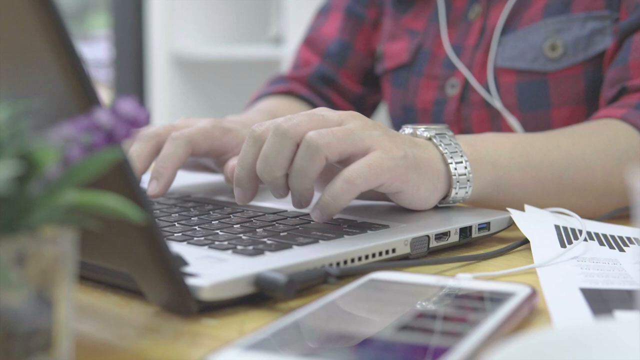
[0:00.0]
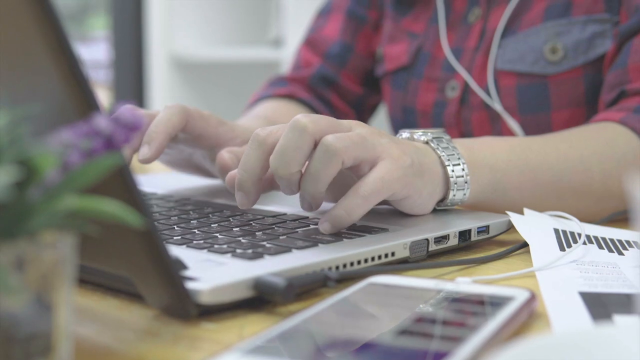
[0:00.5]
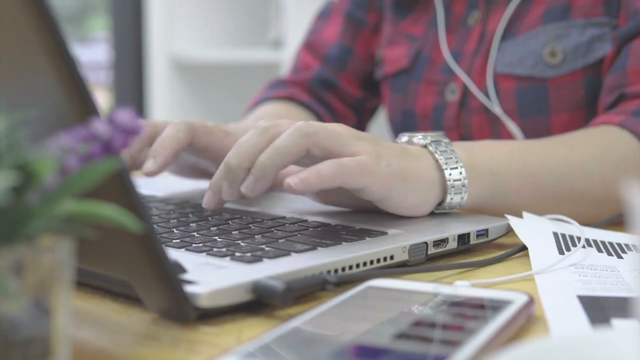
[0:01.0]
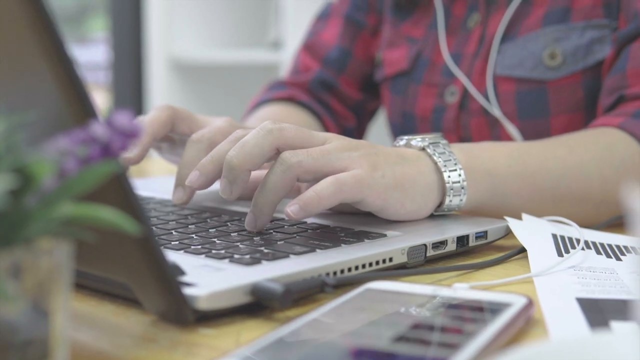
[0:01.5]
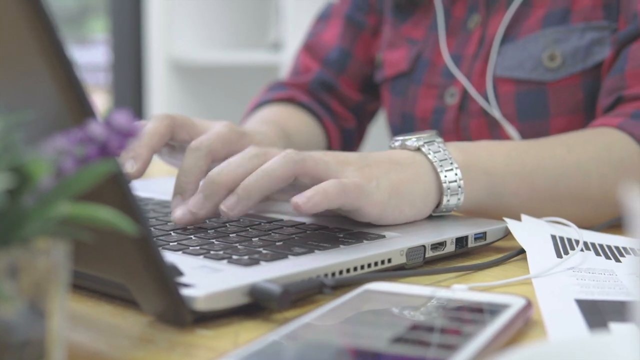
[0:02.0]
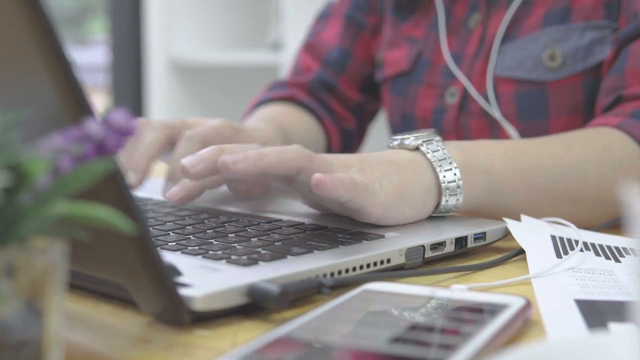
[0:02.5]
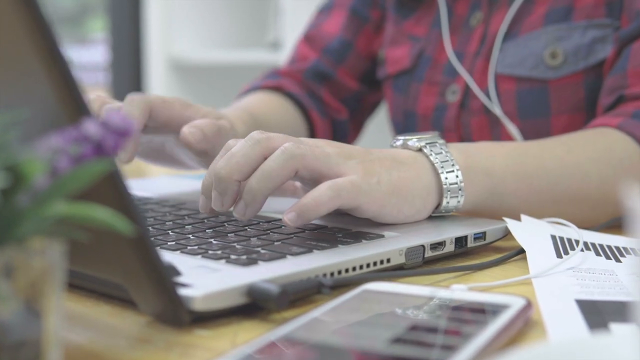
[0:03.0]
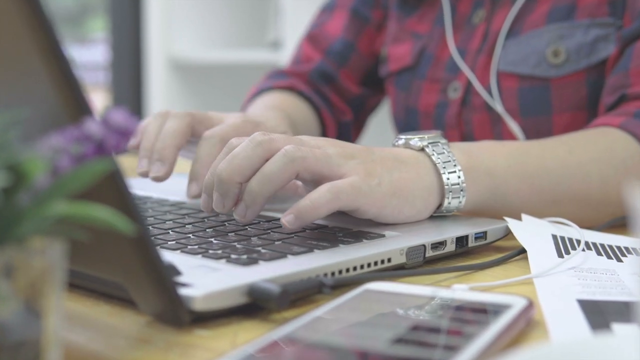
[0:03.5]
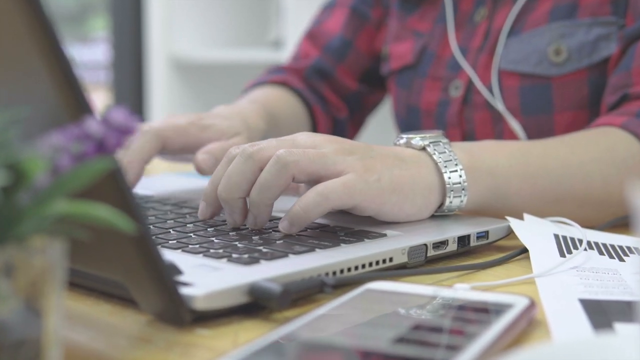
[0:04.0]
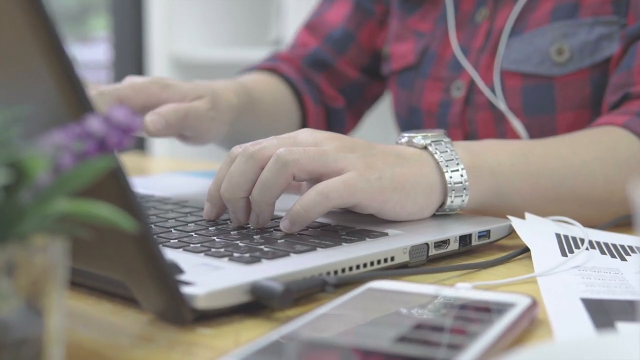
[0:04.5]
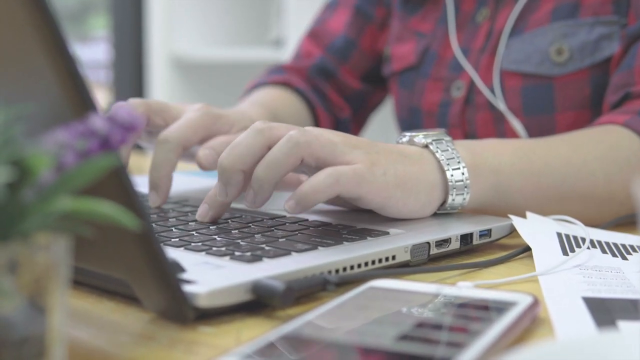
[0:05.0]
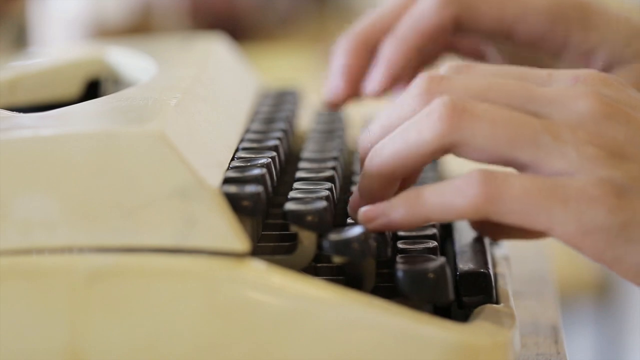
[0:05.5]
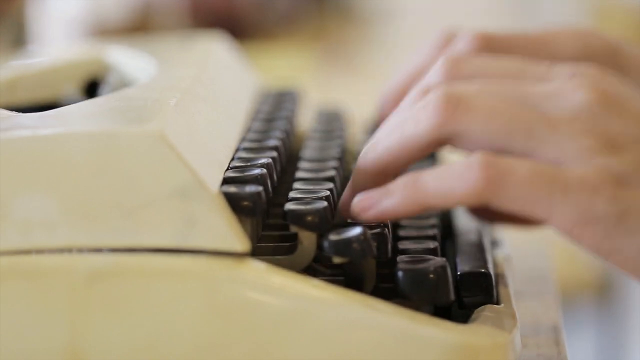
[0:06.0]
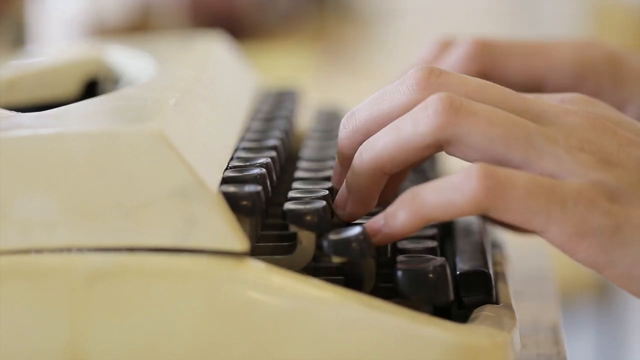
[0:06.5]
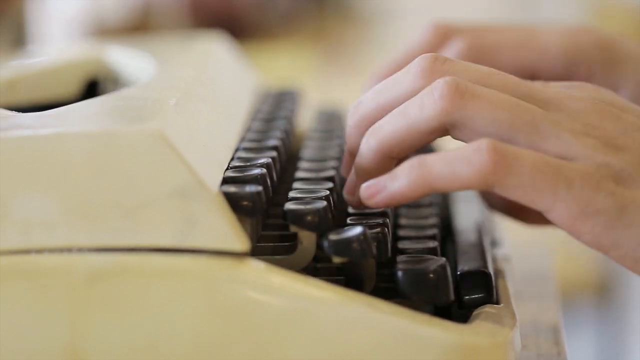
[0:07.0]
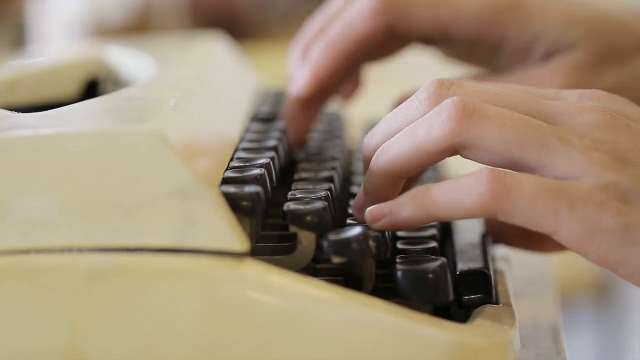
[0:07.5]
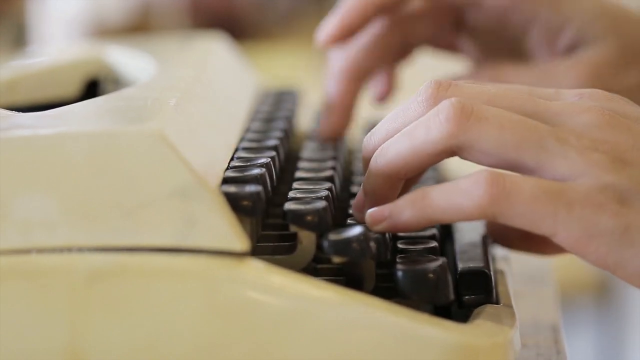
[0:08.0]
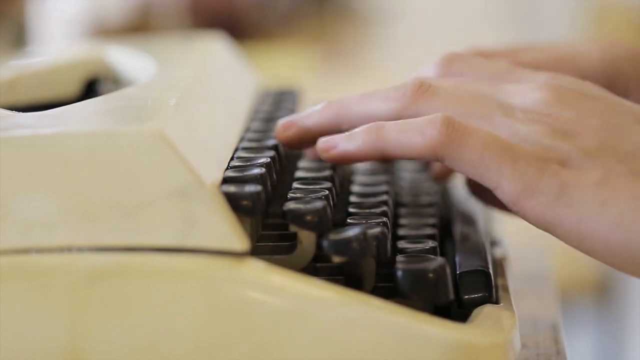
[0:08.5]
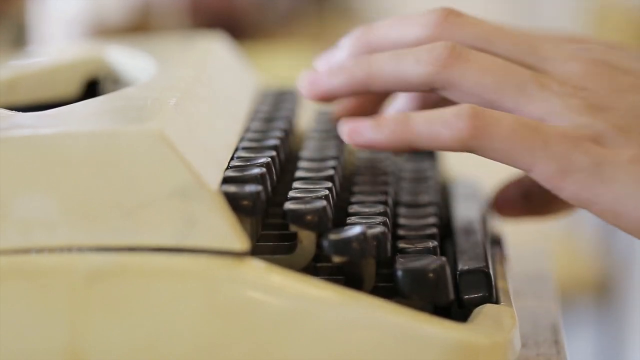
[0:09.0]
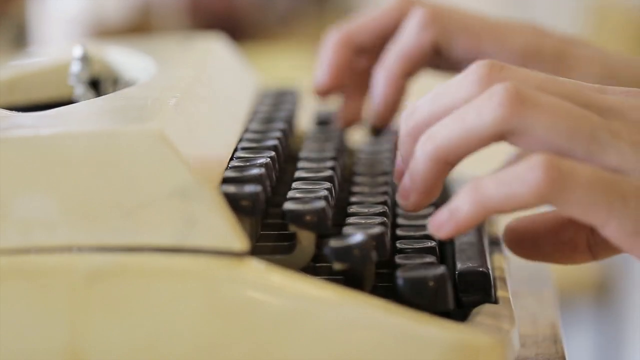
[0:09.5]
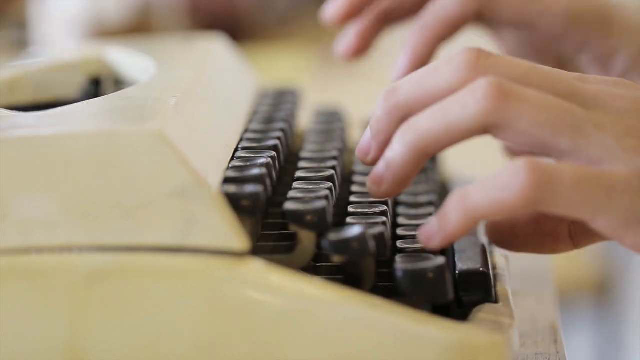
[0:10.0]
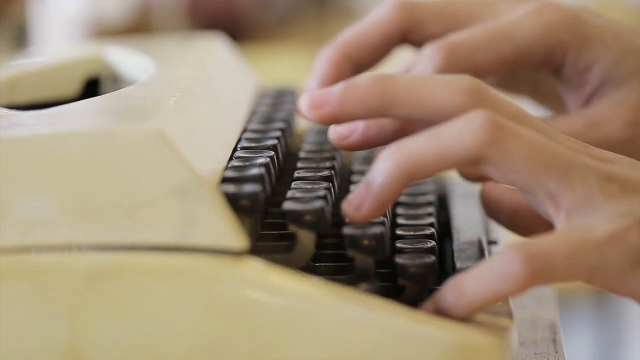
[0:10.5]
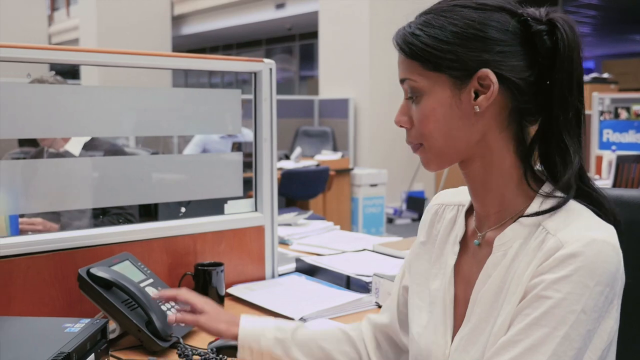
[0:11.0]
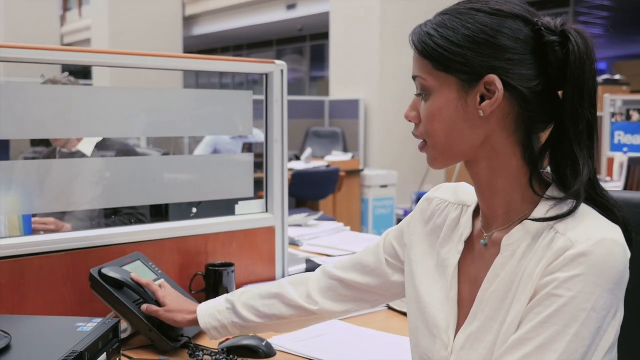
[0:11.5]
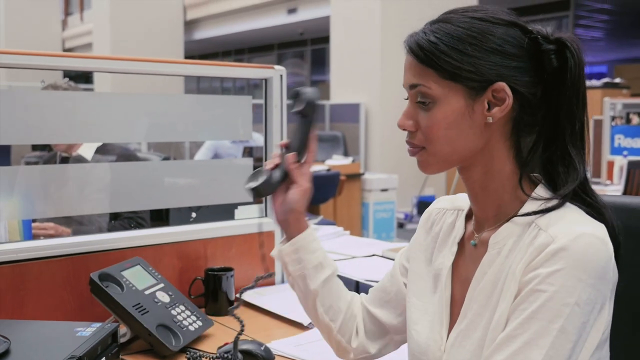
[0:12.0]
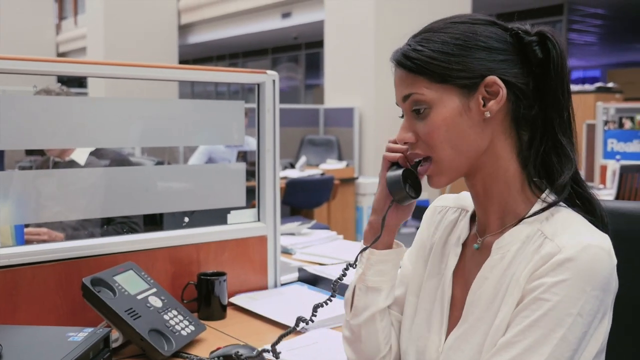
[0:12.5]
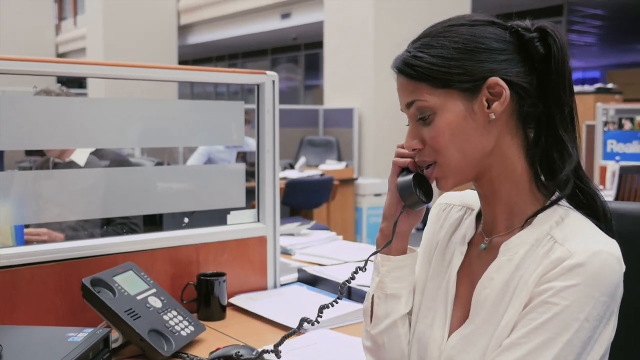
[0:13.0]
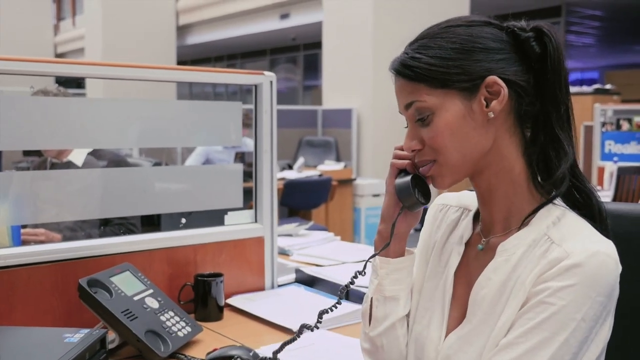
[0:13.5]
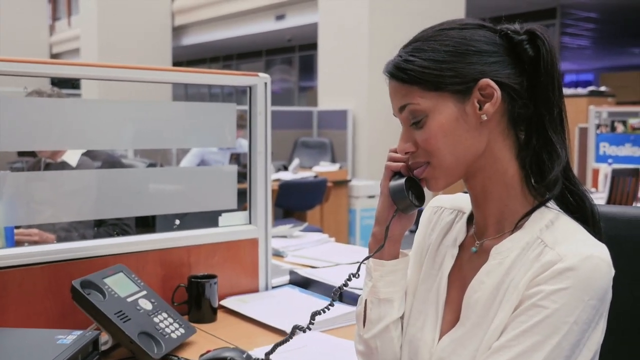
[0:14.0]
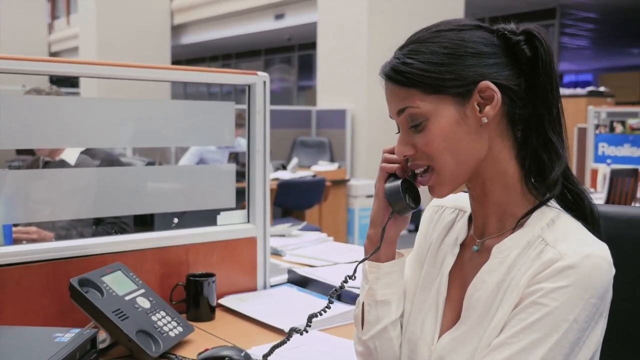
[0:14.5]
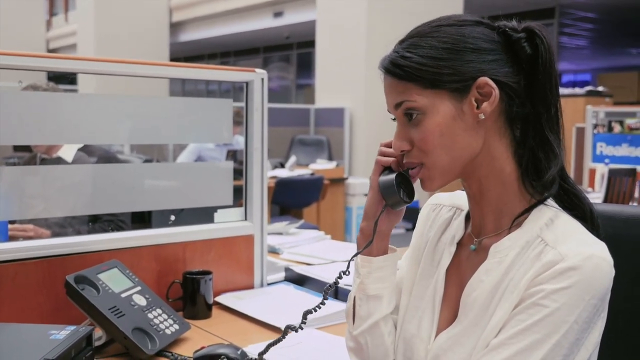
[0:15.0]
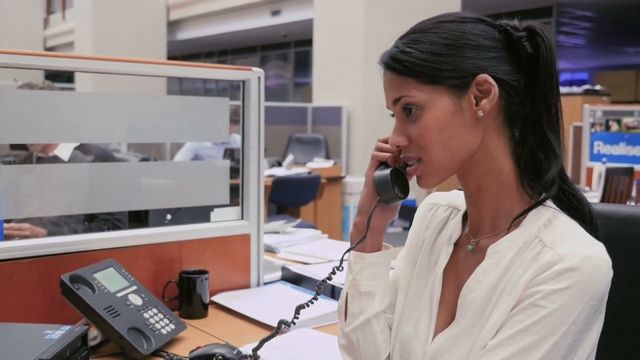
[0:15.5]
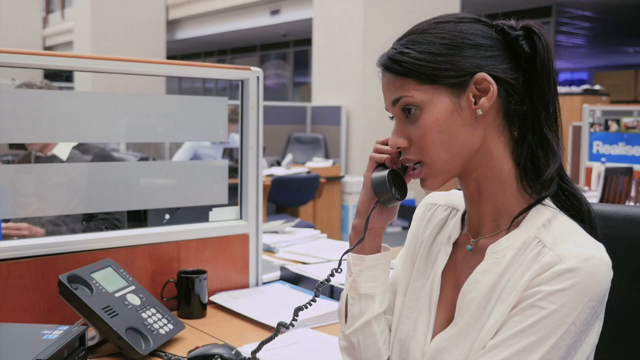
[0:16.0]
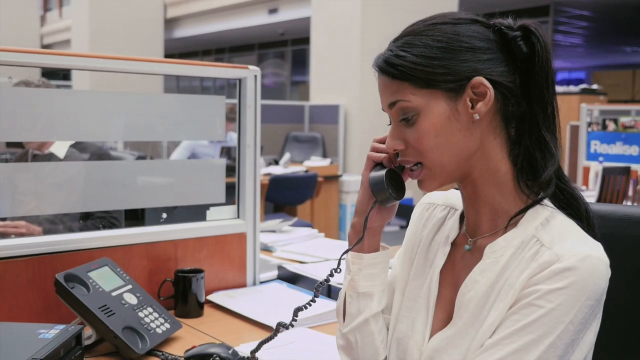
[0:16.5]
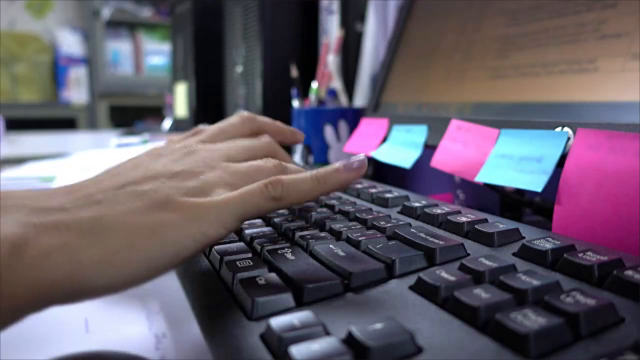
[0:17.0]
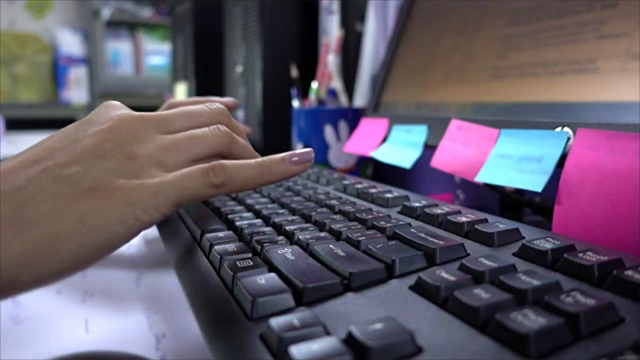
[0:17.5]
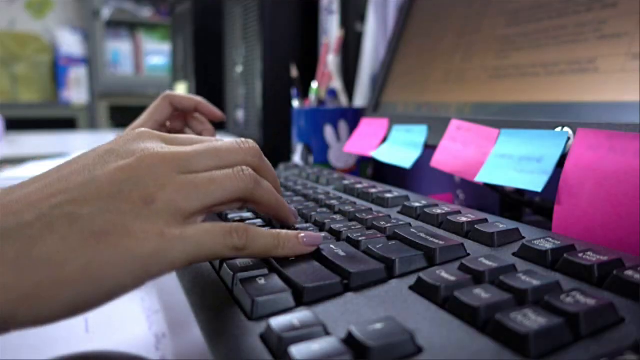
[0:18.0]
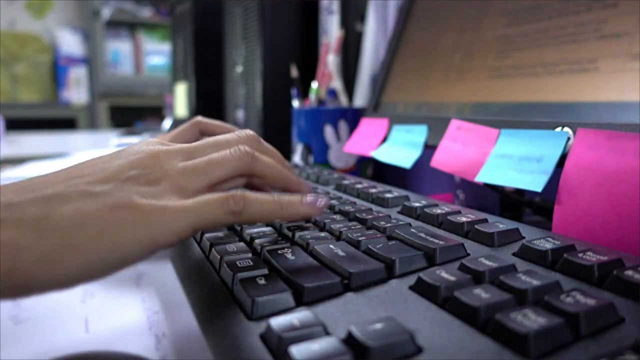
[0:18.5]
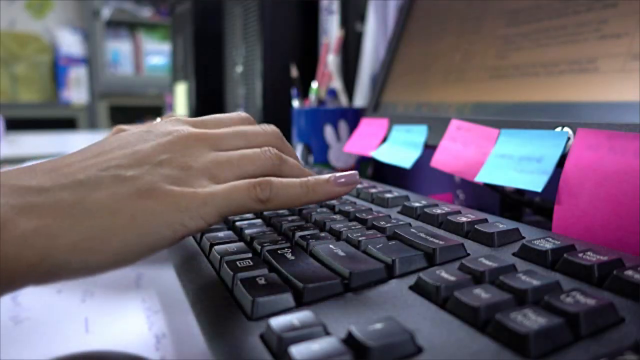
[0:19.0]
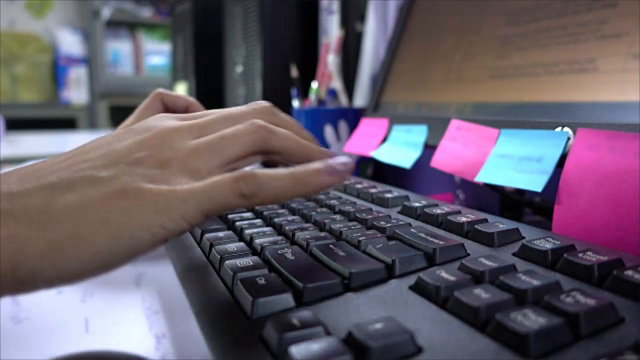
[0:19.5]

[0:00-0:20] A person types on the keyboard of a laptop that is on a wooden table. To the left of the laptop, it is connected to electricity, with the wire going off. An iPad or a phone has headphones connected to it, dangling toward and under the person's arm, which rests on the laptop, and connecting to the person's ears. The person wears a watch on the left arm while typing. Next, another person types with both arms on a typewriter. Then a woman who seems to be in an office appears; she is African-American, wears white, and picks up the phone and starts communicating. She is in what looks like a cubicle whose sides are glass, with rectangular panels that give some privacy. Next, a woman with purple nails types on a black keyboard.